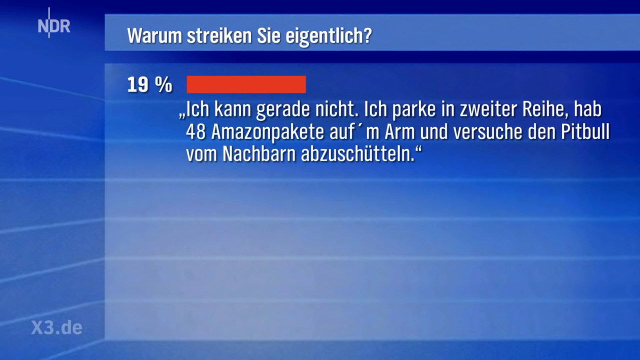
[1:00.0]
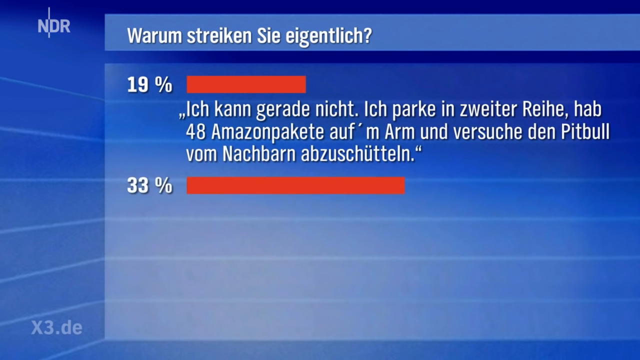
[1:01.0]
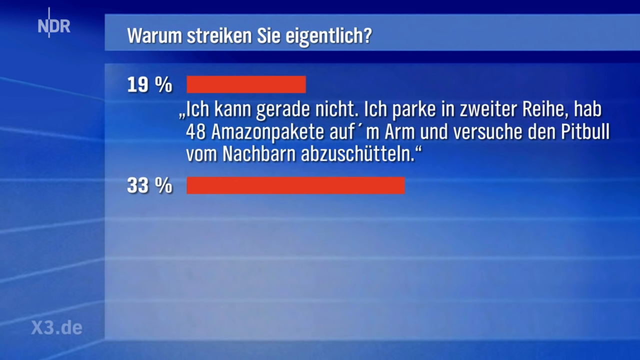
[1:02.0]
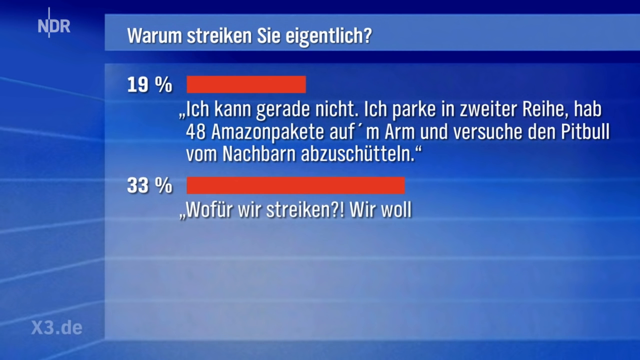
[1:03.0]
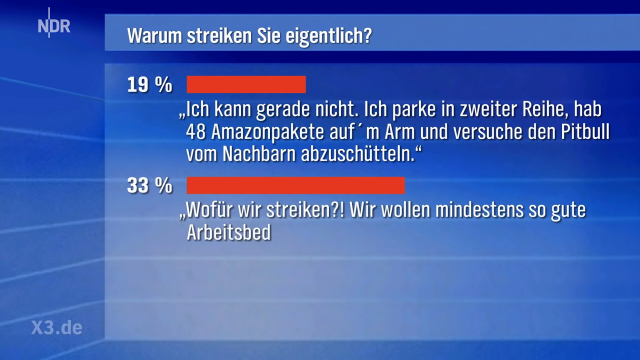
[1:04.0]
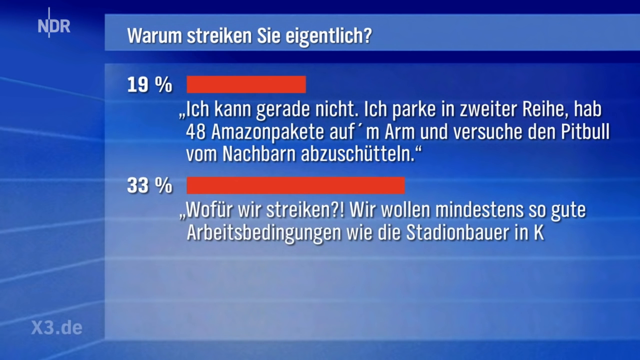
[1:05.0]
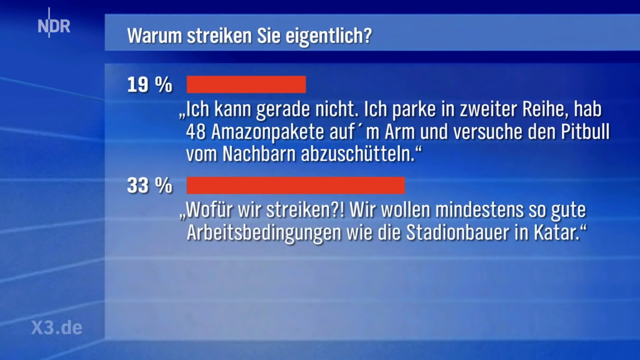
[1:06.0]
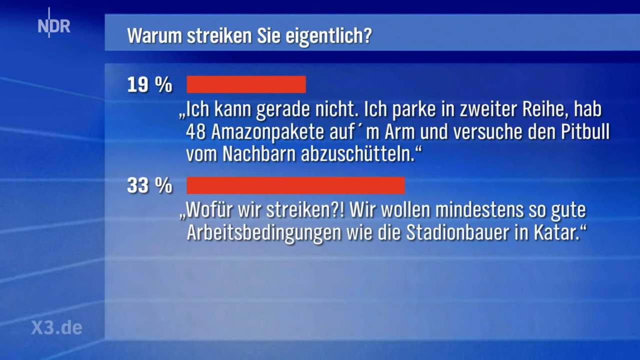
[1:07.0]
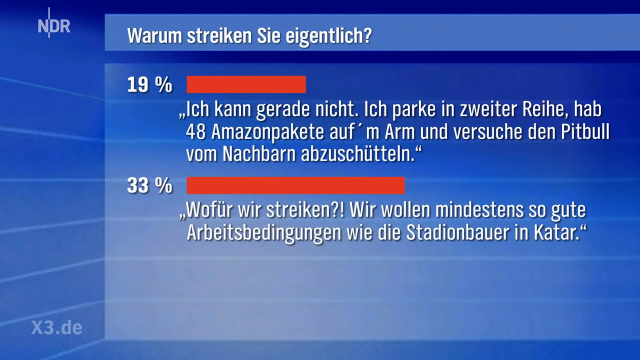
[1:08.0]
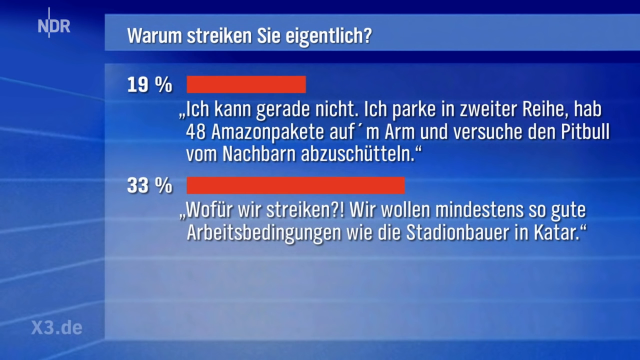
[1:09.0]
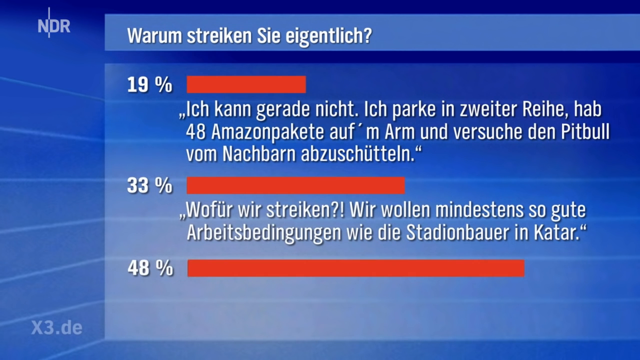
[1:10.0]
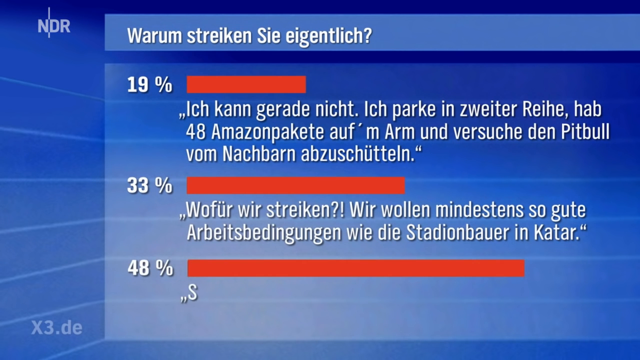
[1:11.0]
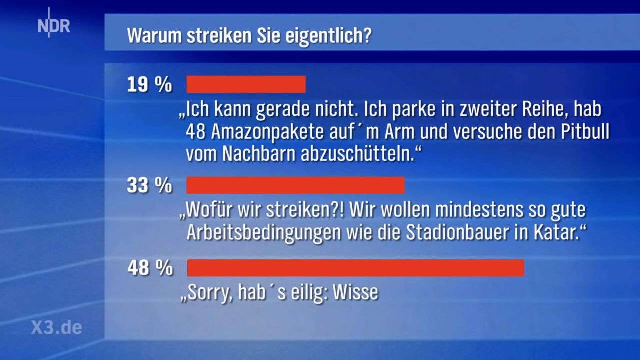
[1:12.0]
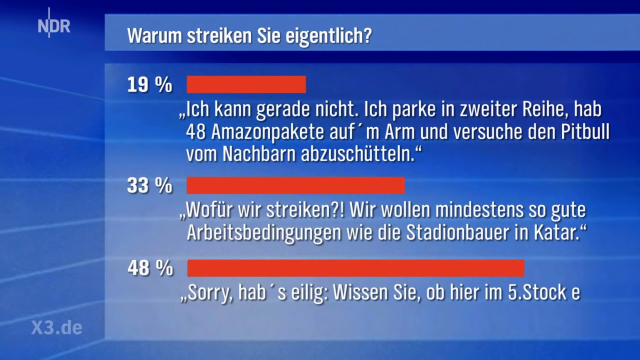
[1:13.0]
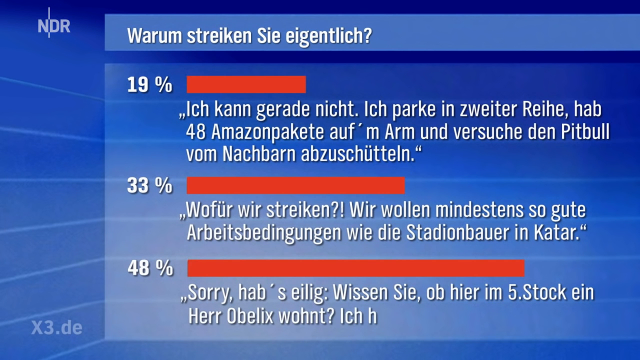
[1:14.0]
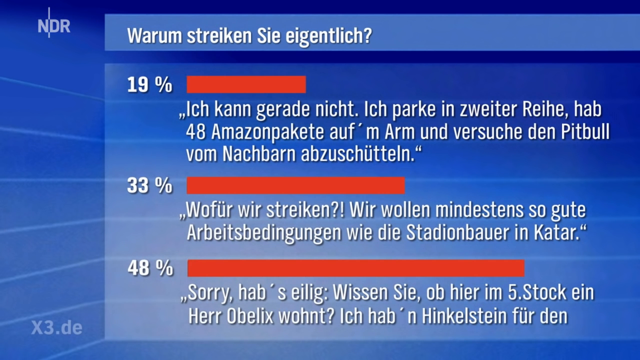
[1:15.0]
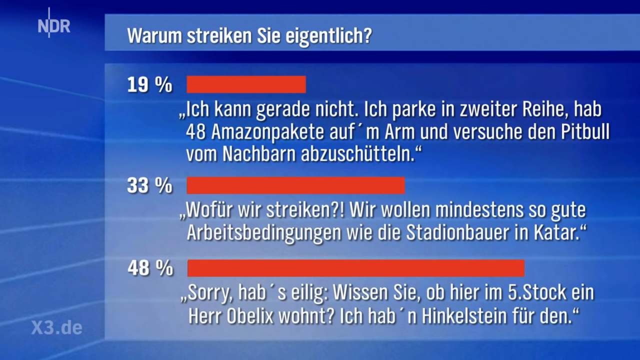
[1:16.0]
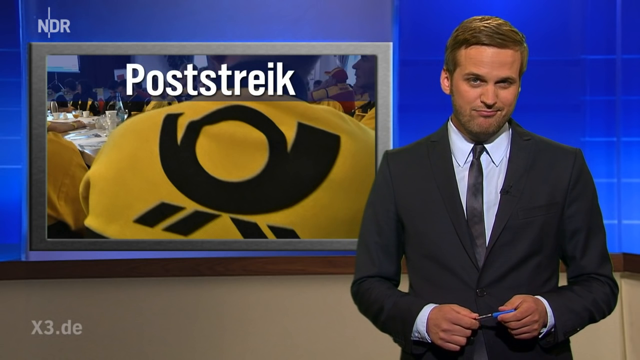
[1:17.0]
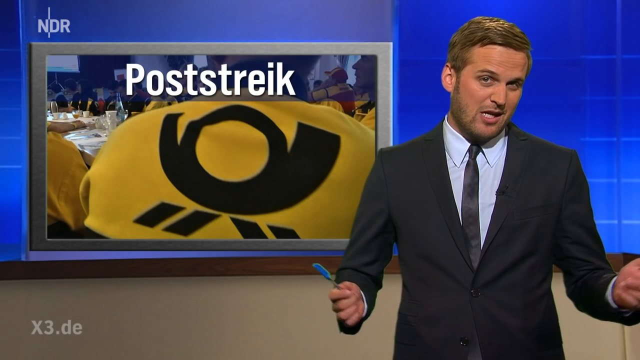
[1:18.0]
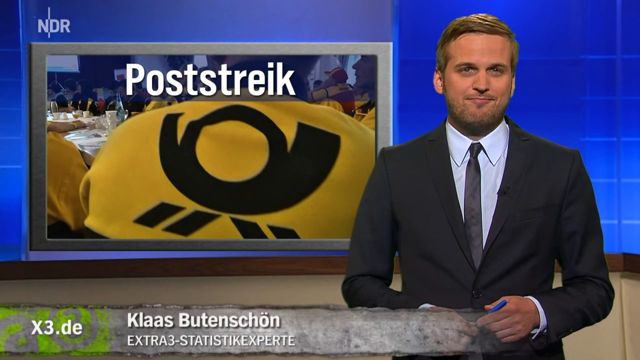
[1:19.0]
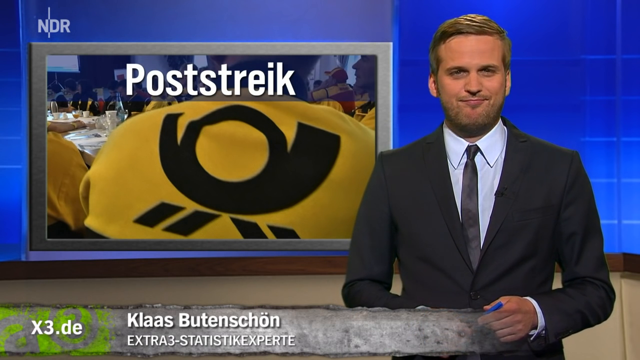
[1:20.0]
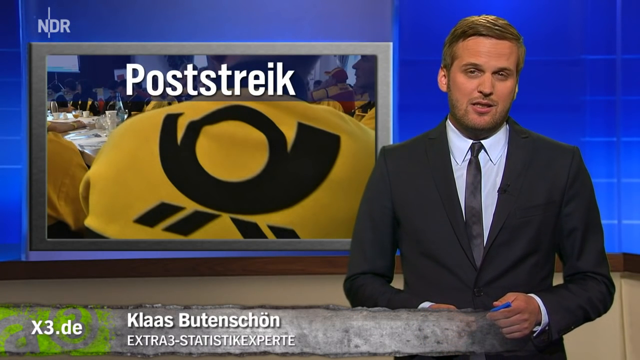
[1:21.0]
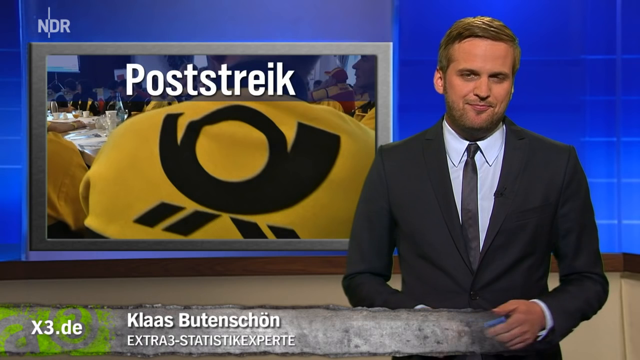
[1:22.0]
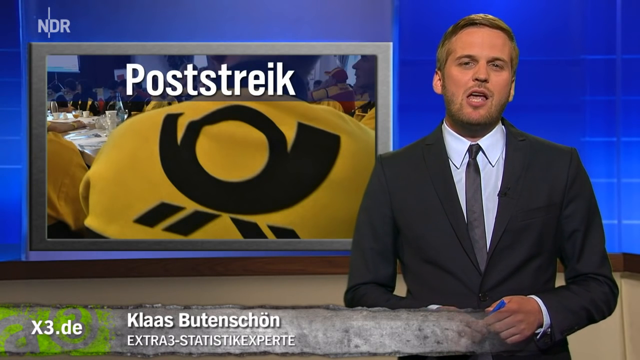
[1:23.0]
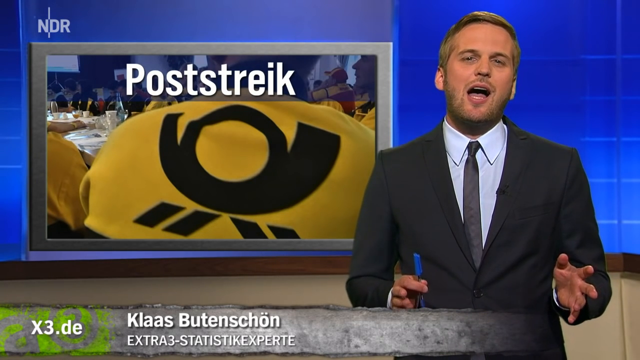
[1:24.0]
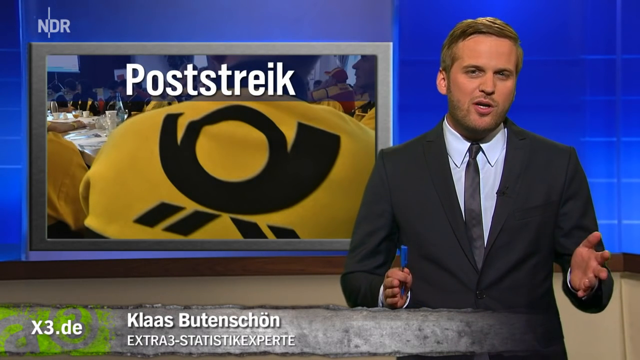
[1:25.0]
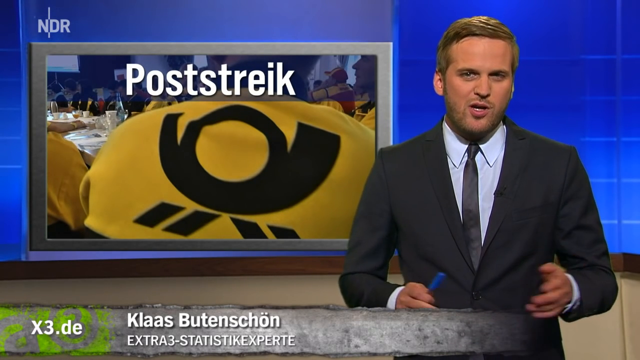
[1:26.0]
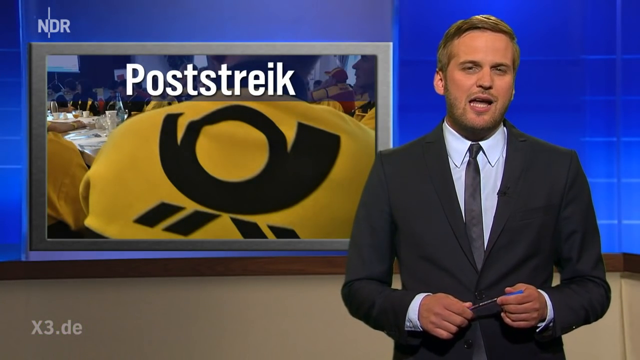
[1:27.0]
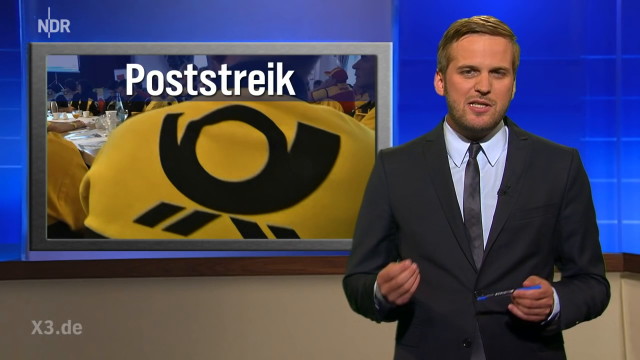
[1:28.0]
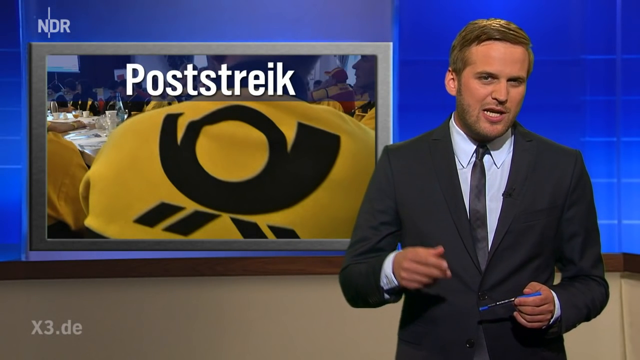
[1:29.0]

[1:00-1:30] The blue background appears to be a zoomed-in view of the monitor in the news studio. At the top, mostly on the left, white text reads "Warum streiken Sie eigentlich?", with "Sie" capitalized mid-sentence. Beneath it, "19%" appears with a red rectangular bar. Underneath are three responses in a foreign language. The number 48 is visible, as are the words "pit bull". Another response shows "33%" with a longer bar, and a question mark and an exclamation point appear right next to each other after the first three words of one response. Then "48%" appears with an even longer bar, so the bars get longer as the percentages increase. The video then returns to the second man, whose first name is shown as "Klaas".